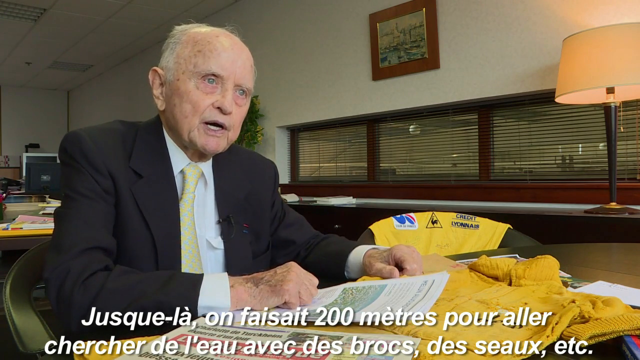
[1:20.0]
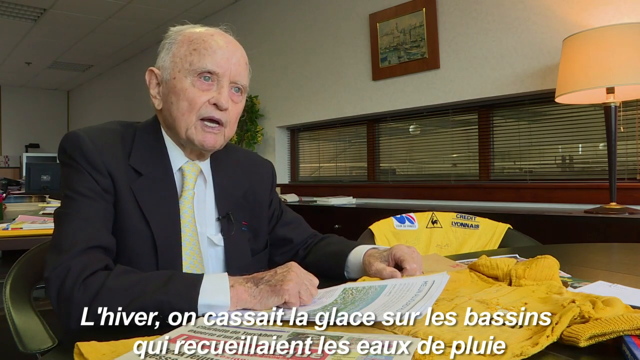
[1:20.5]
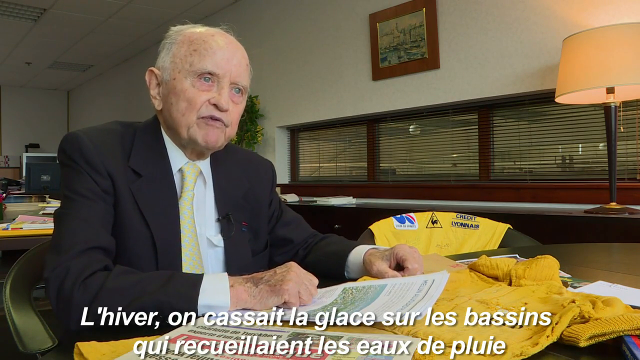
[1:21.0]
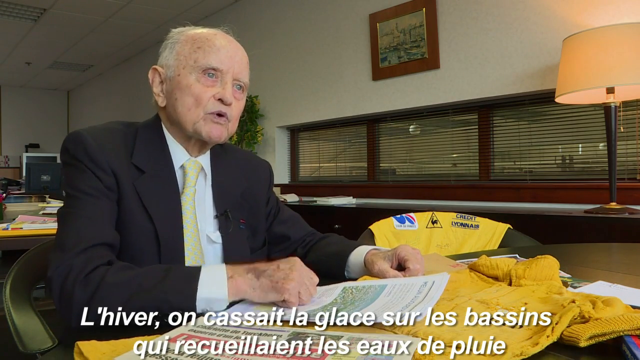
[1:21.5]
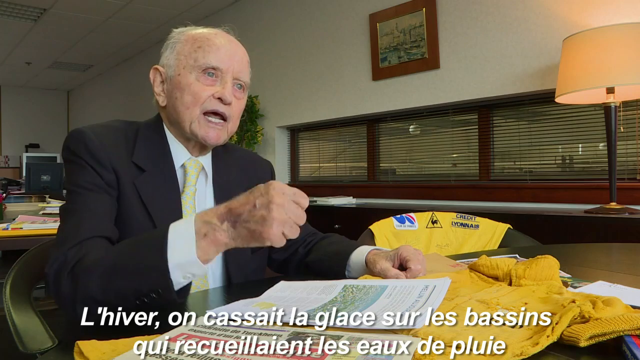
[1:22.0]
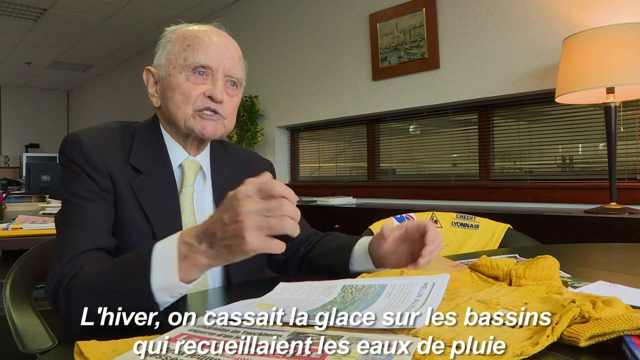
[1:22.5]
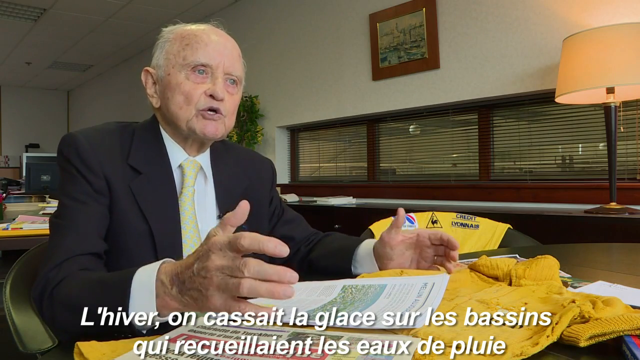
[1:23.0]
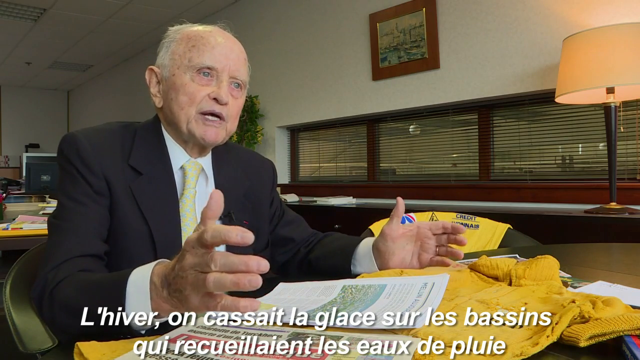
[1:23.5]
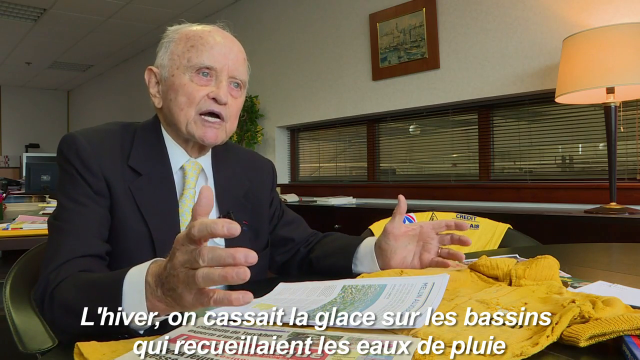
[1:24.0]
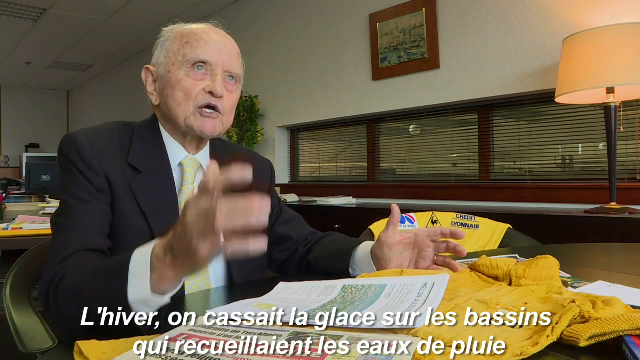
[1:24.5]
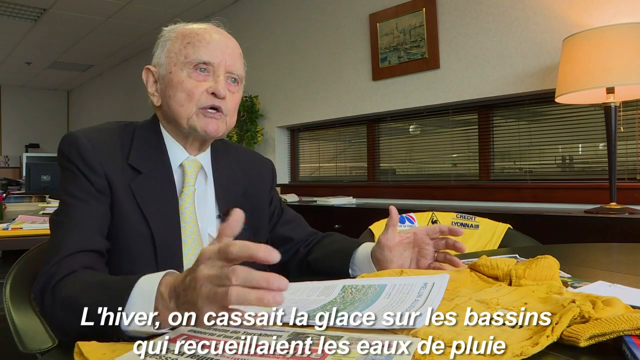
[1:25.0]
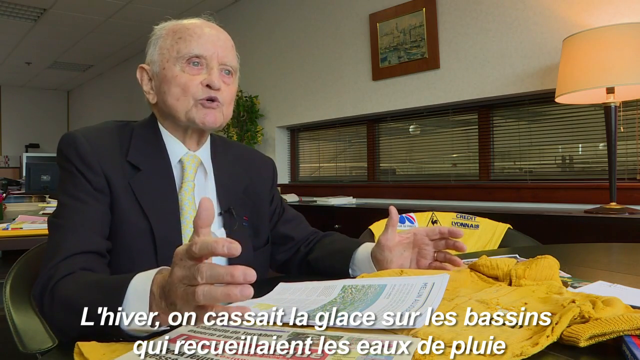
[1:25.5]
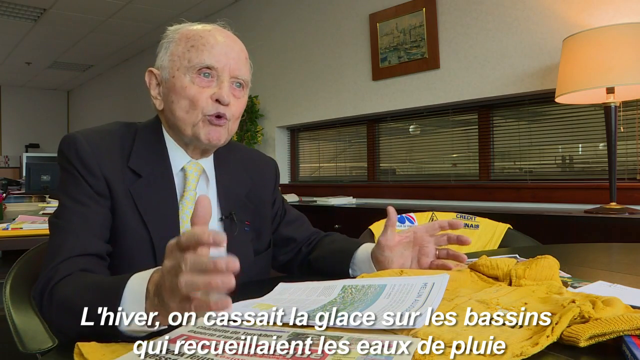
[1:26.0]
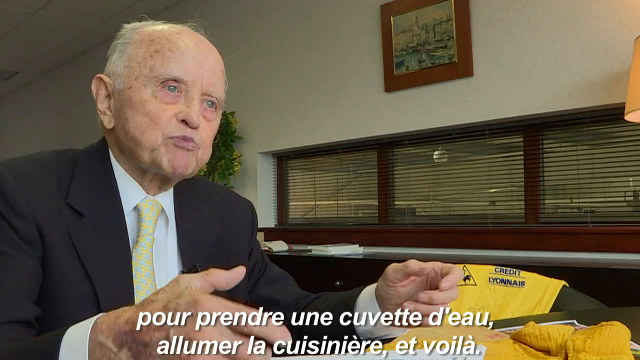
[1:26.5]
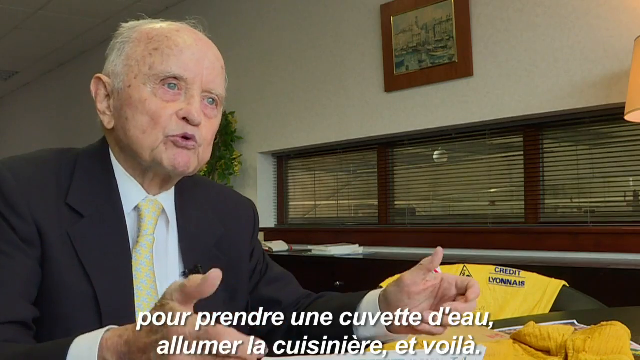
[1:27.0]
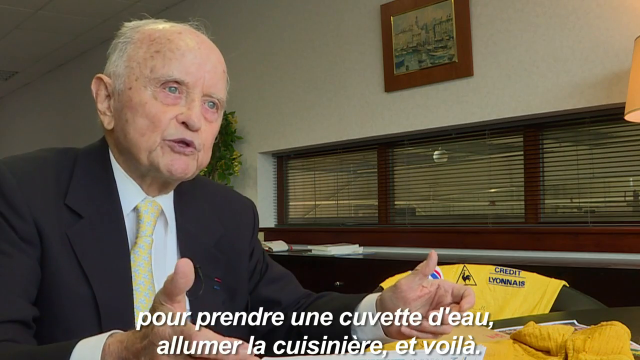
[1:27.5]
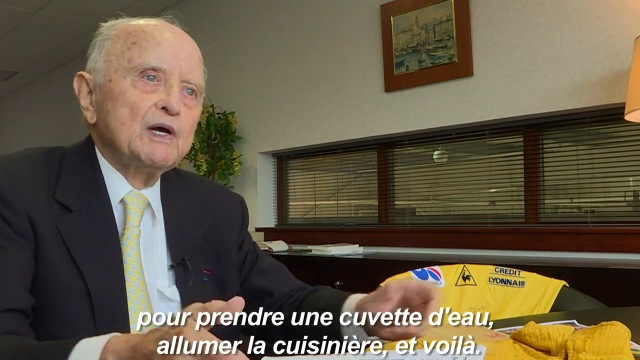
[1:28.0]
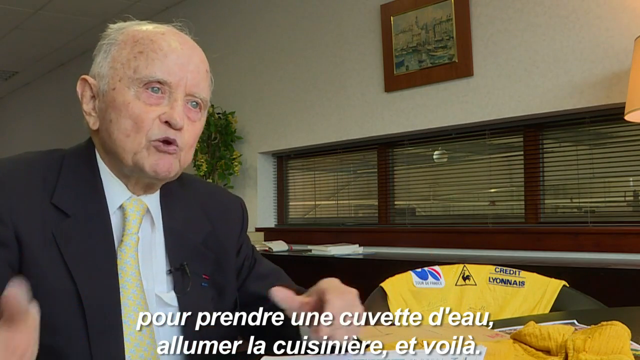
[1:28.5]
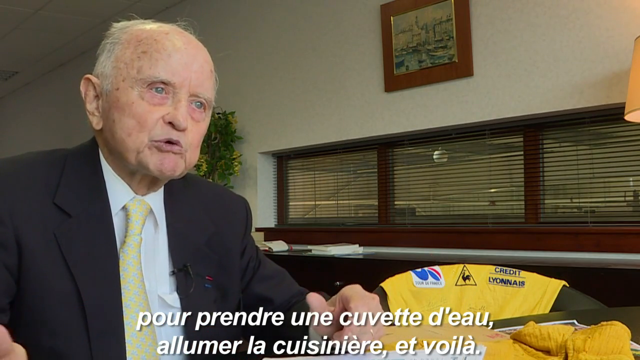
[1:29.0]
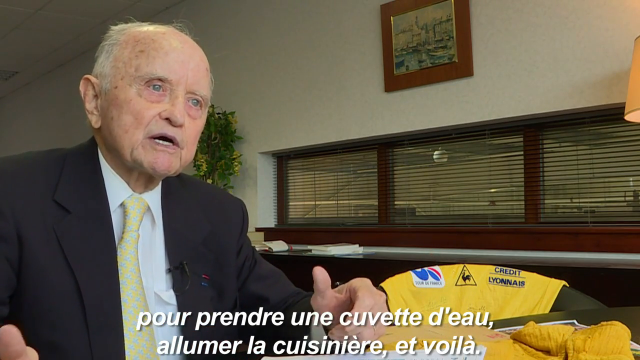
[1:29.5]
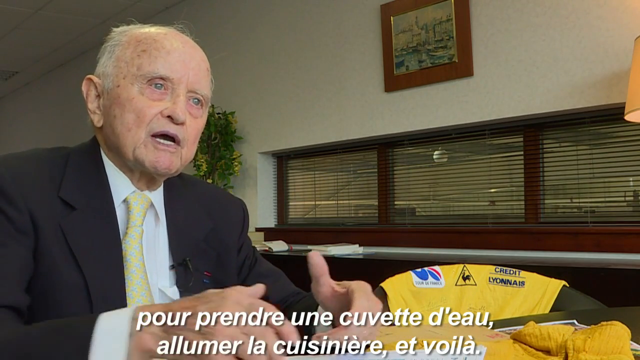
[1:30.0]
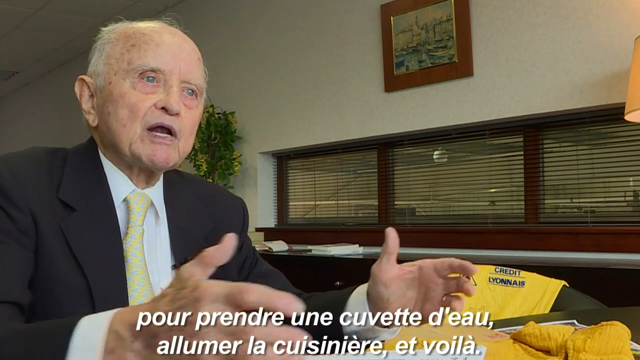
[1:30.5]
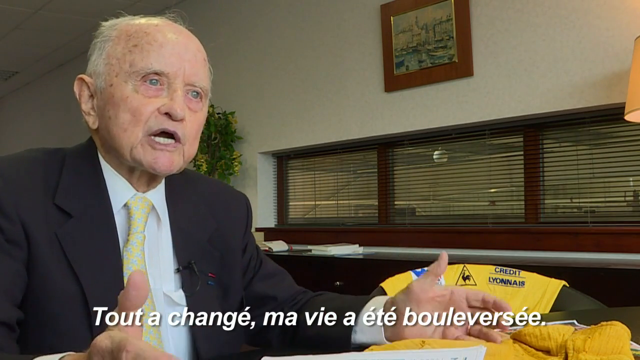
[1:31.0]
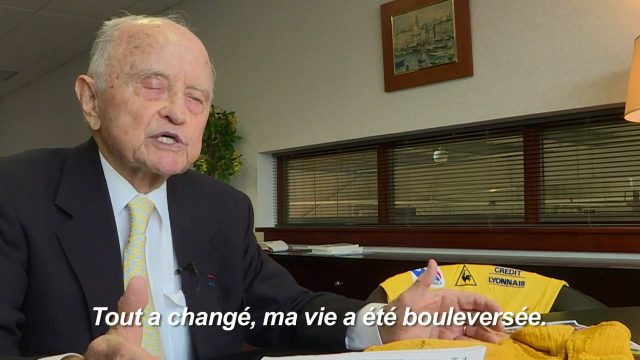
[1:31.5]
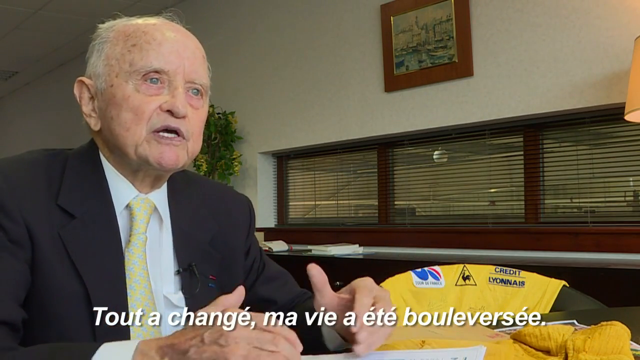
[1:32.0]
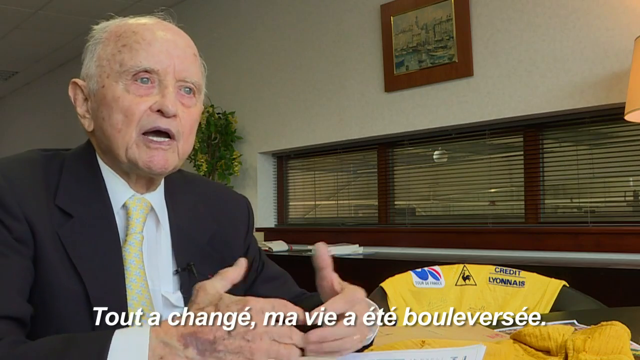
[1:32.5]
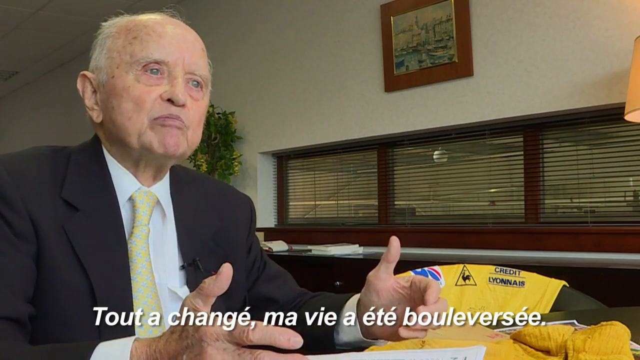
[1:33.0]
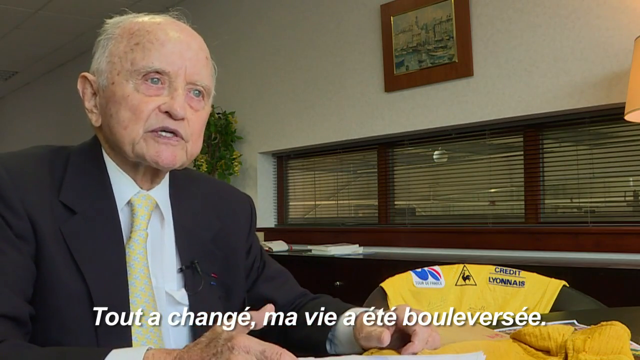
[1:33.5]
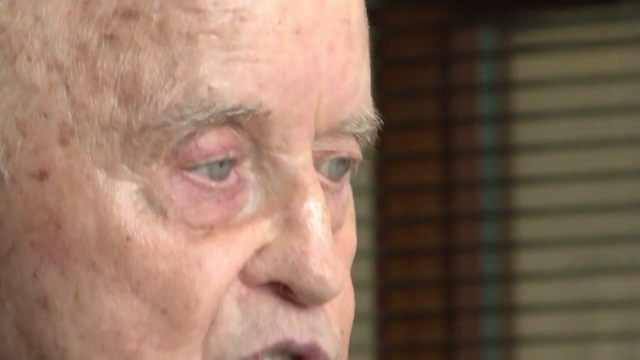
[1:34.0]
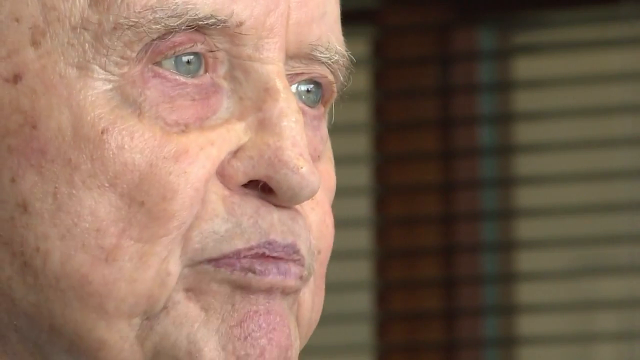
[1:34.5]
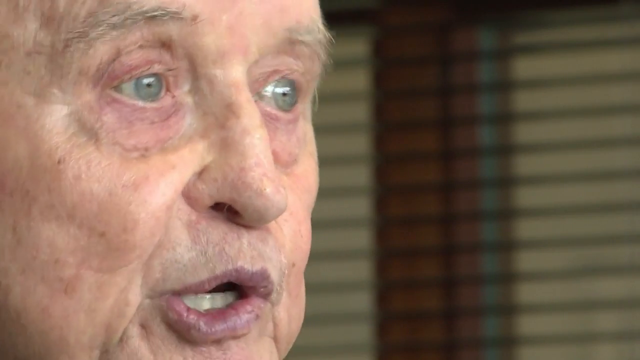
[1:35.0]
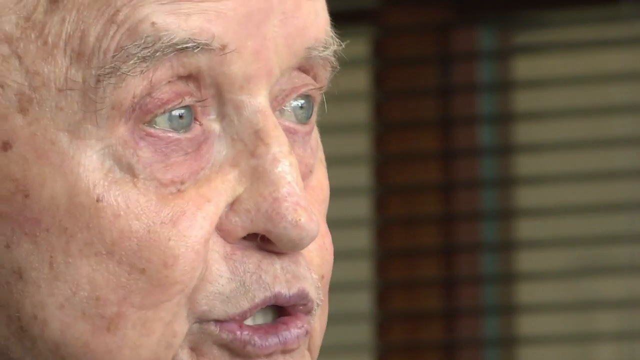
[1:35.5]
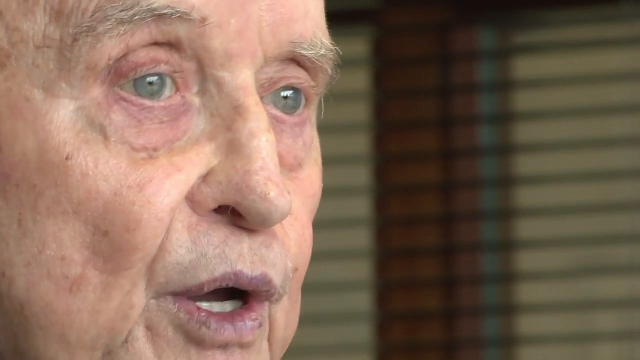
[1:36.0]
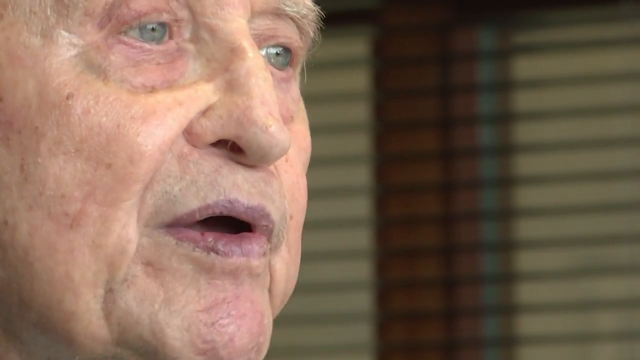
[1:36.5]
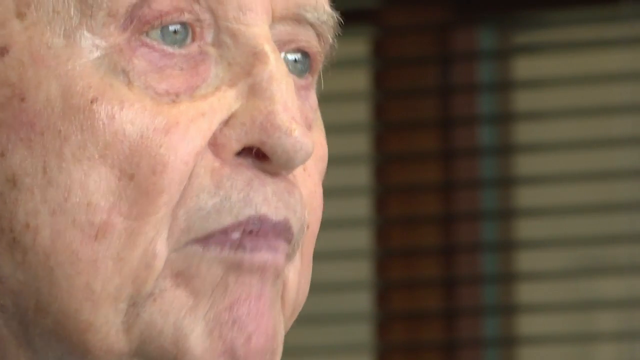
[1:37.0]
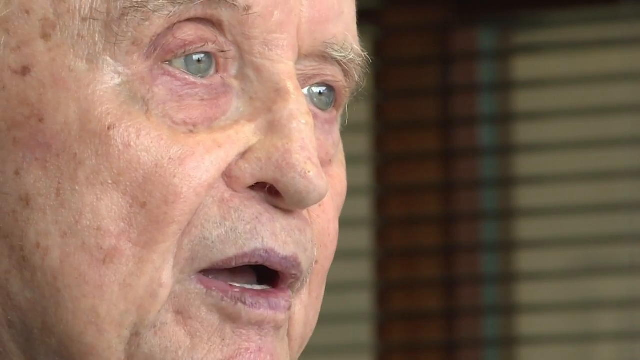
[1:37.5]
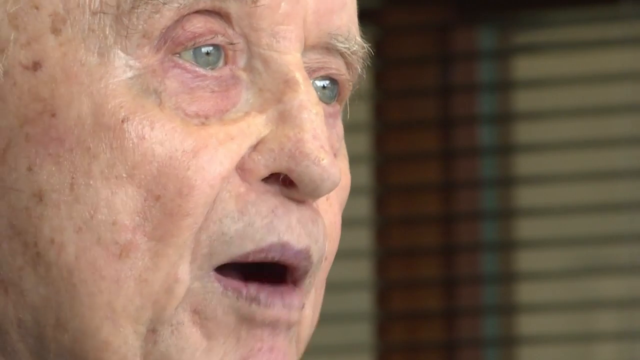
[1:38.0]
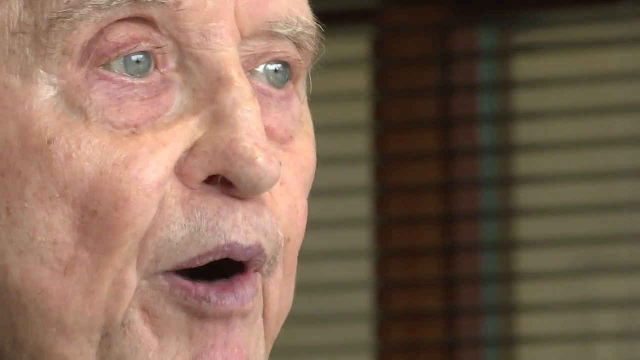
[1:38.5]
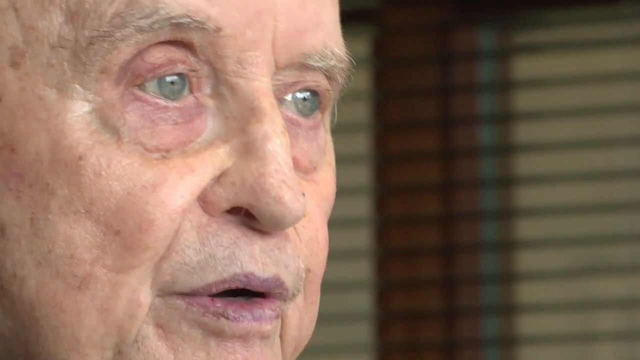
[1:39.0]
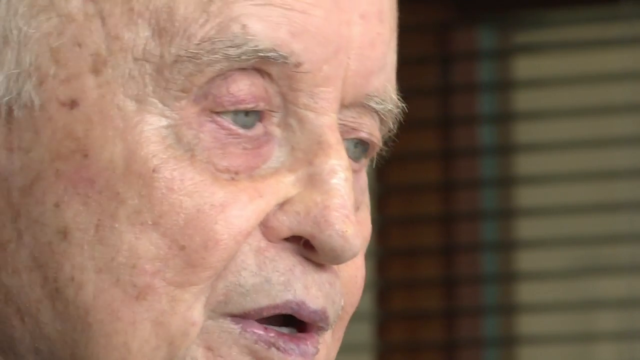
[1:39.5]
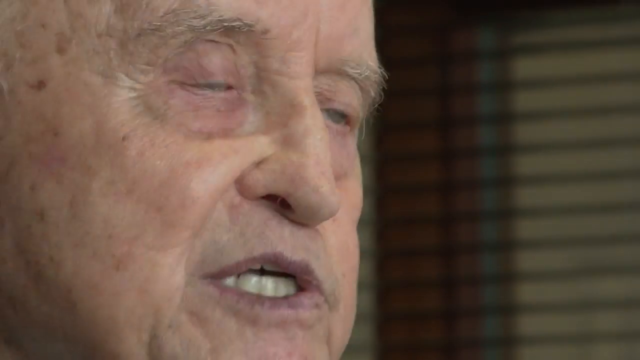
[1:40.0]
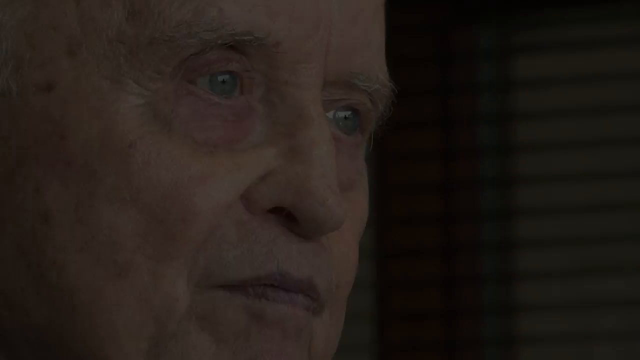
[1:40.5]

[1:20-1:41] The man sits still on the left side at the table, arms bent at the elbows; his right arm goes across, making a fist with the back of the hand up, resting on the paper, and his other hand makes a fist with the back of the hand up, resting on the yellow shirt. White foreign-language text scrolls across the bottom as he looks off a little to the right. While talking, he raises his right hand, kind of motions it in a ball and then opens it, as he raises his left hand a little and opens it, palms toward each other, then spreads his fingers wider with palms still out. He raises his right hand a little and brings it back down, getting more animated as he talks. The camera zooms in a little on him, so the table is barely visible at the bottom. He looks off to the right and forward as he talks; his left hand moves off the screen, his thumb kind of upward, almost making a fist. He brings his hands closer together, moves them farther apart, brings them back until his fingertips touch, then moves them out again. A close angle then shows the side of his face, with just his eyes, nose and mouth on the left side of the screen, taking up half of it; his eyes are a very light greenish blue, and his head moves up and down slightly as he talks.